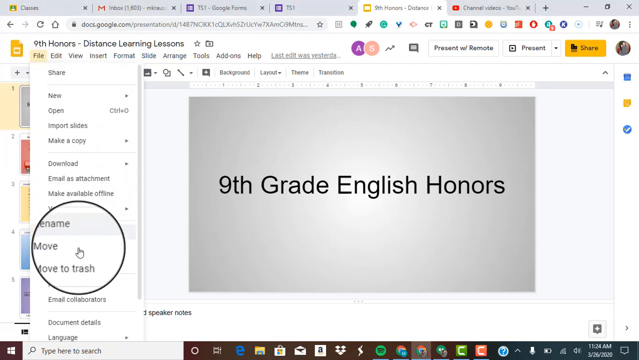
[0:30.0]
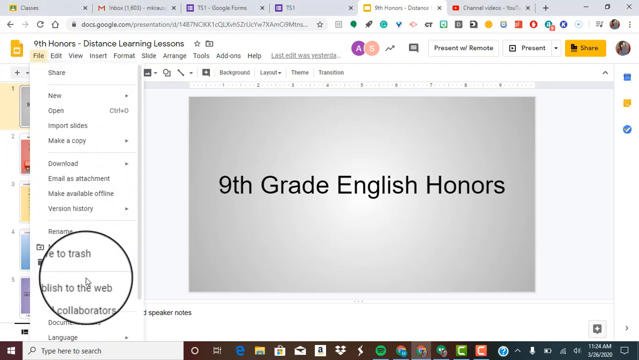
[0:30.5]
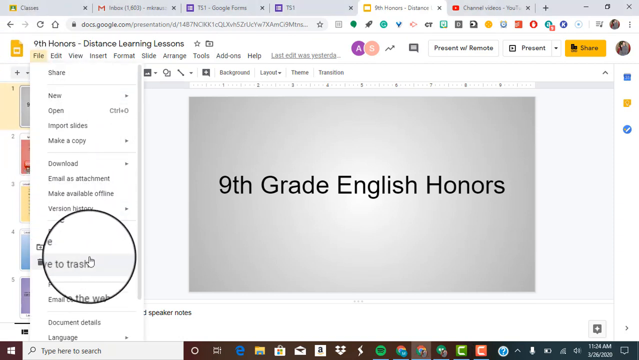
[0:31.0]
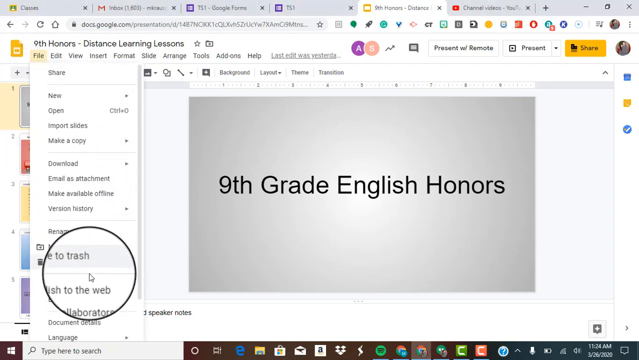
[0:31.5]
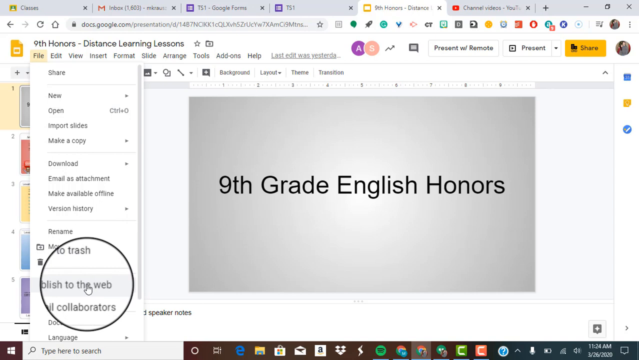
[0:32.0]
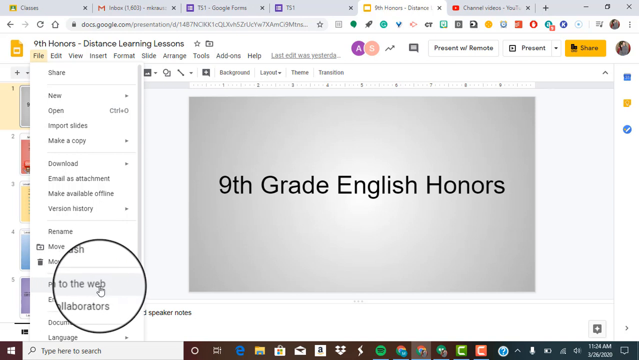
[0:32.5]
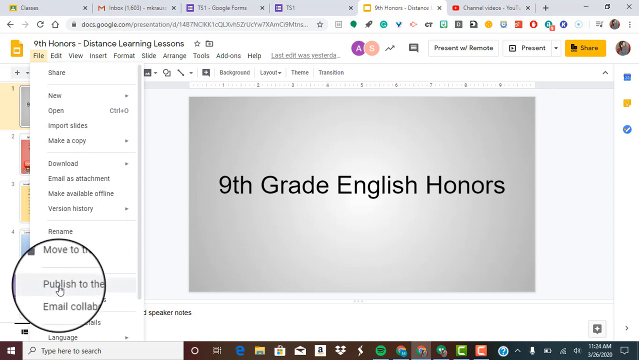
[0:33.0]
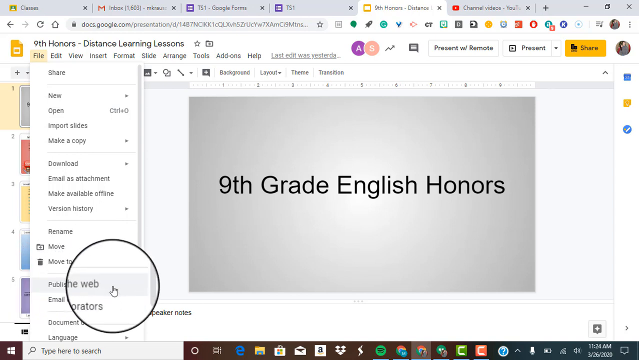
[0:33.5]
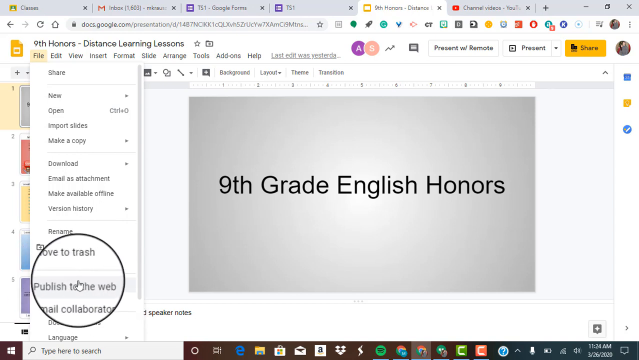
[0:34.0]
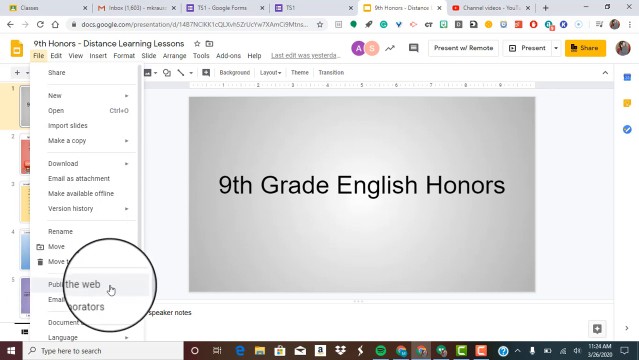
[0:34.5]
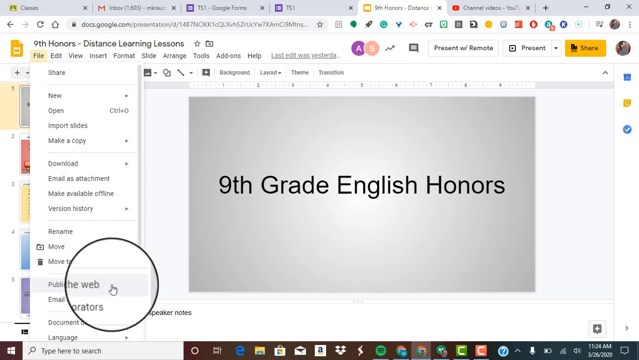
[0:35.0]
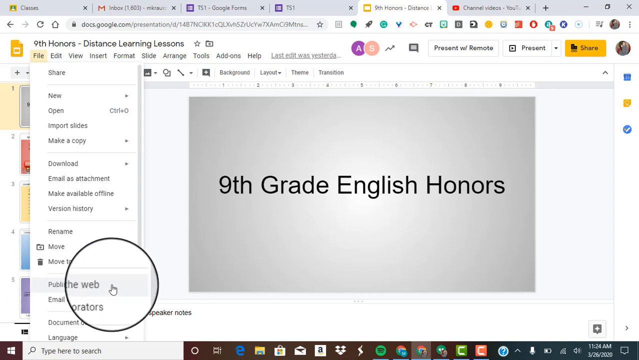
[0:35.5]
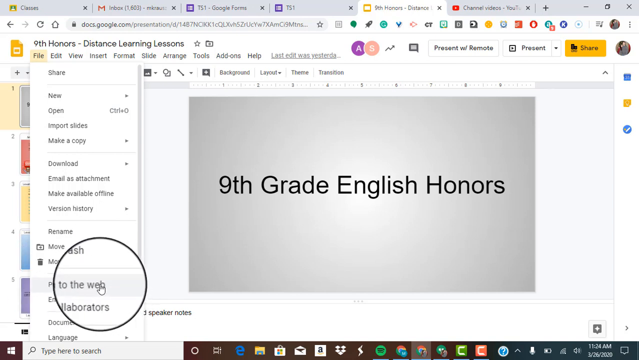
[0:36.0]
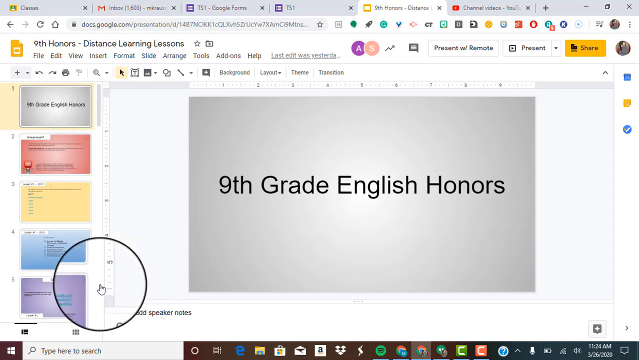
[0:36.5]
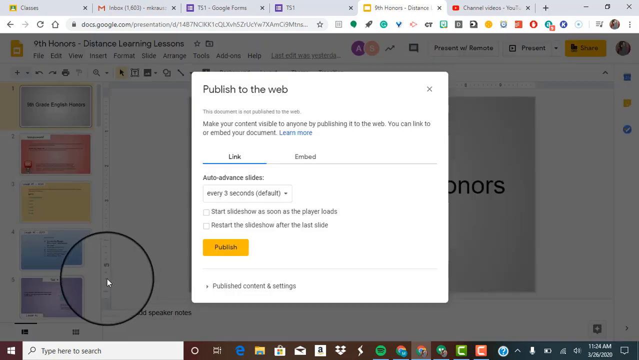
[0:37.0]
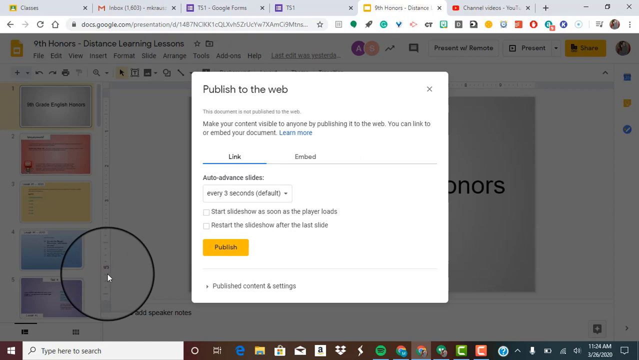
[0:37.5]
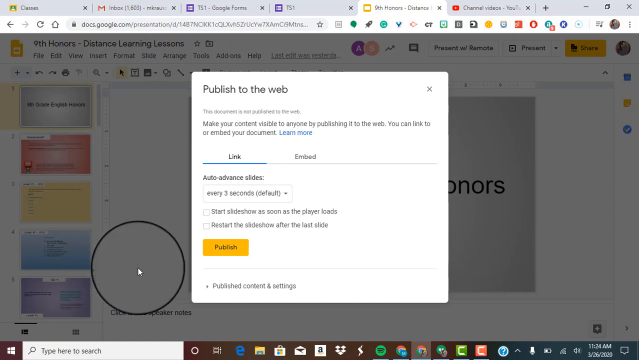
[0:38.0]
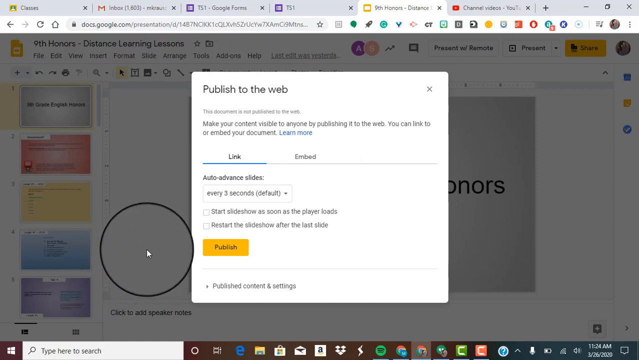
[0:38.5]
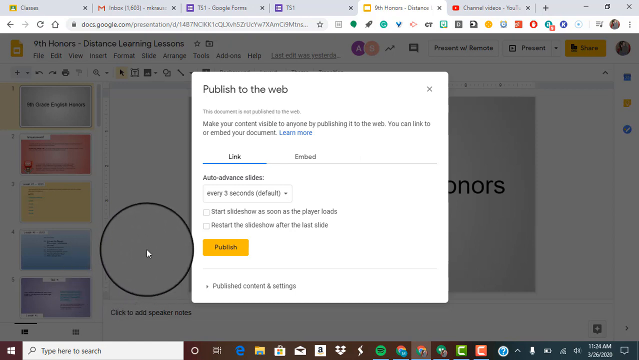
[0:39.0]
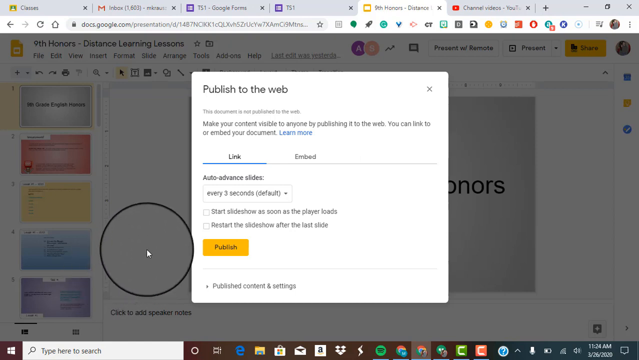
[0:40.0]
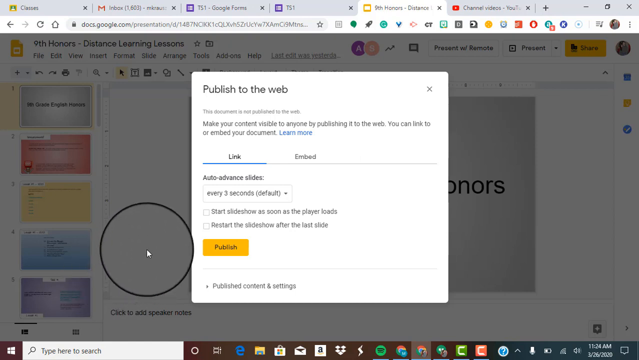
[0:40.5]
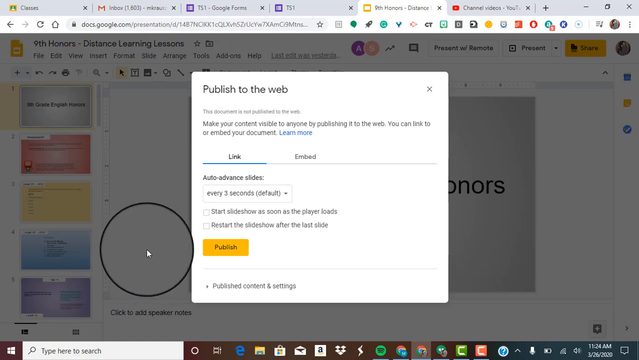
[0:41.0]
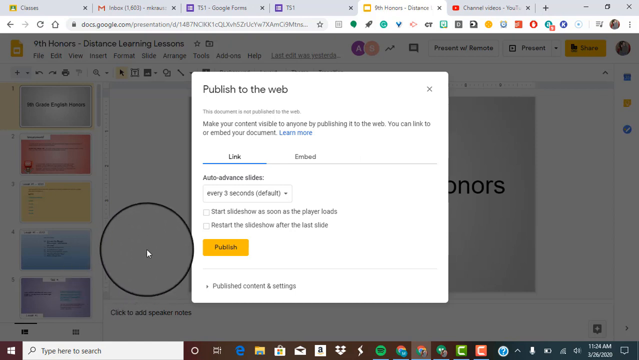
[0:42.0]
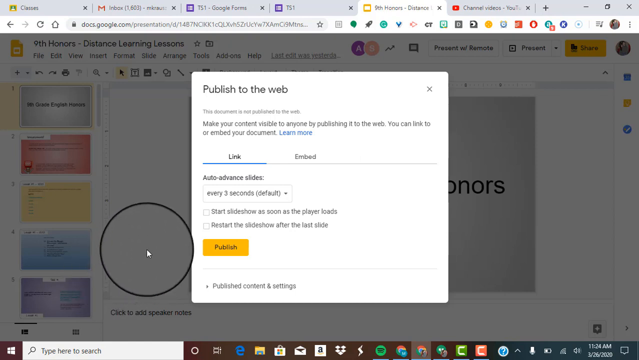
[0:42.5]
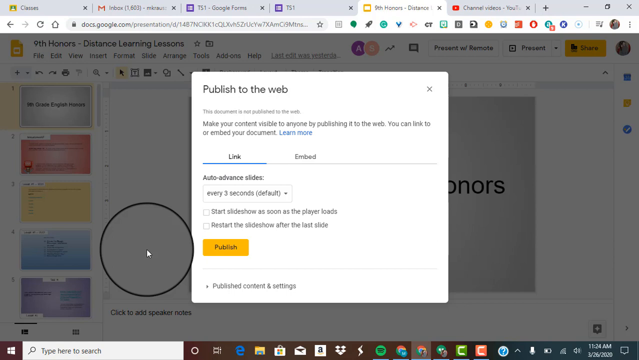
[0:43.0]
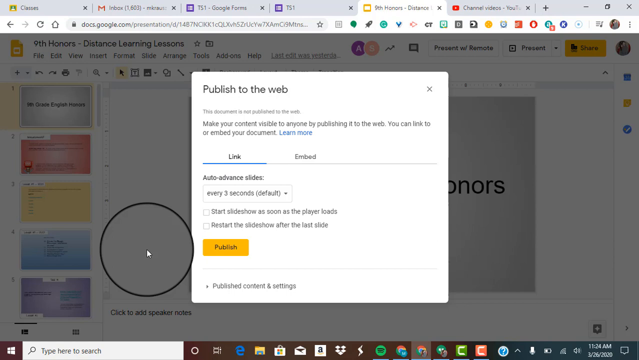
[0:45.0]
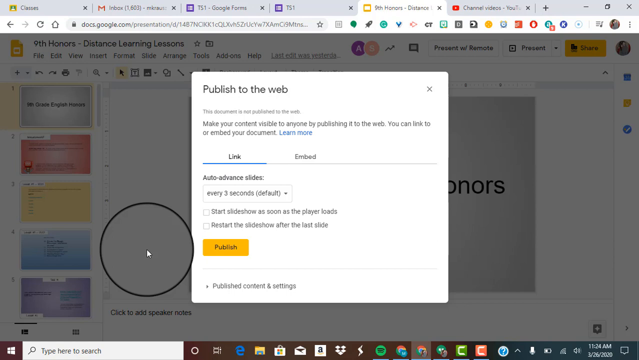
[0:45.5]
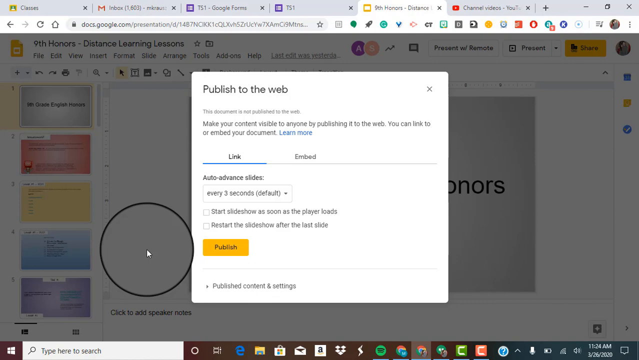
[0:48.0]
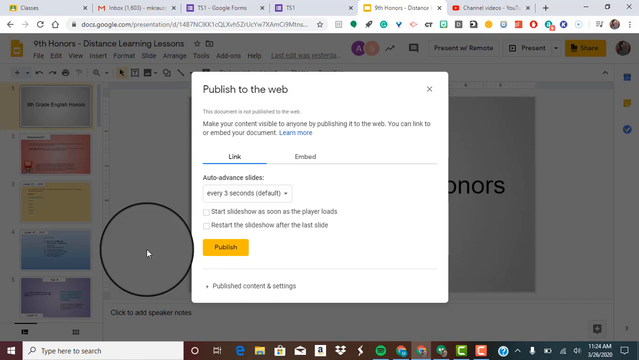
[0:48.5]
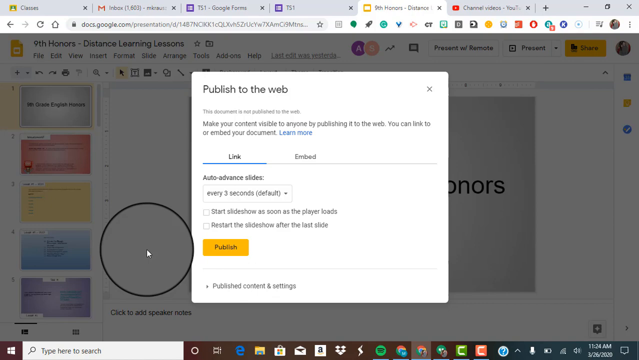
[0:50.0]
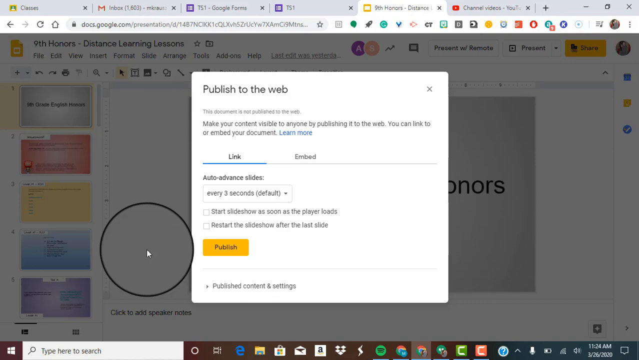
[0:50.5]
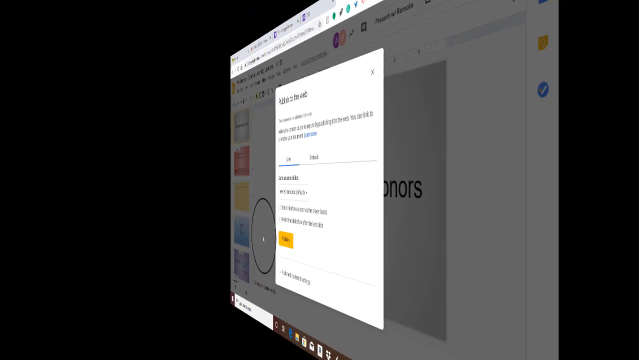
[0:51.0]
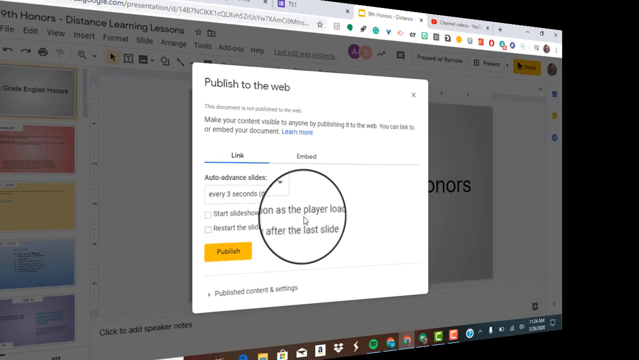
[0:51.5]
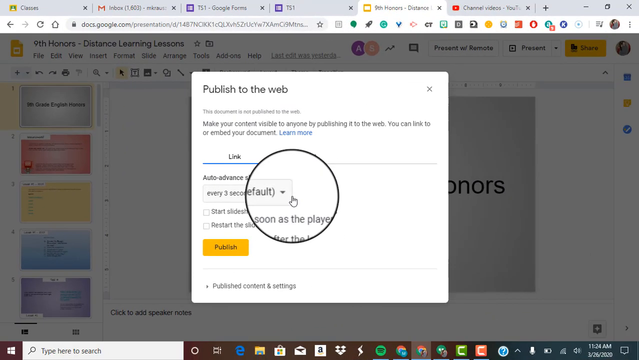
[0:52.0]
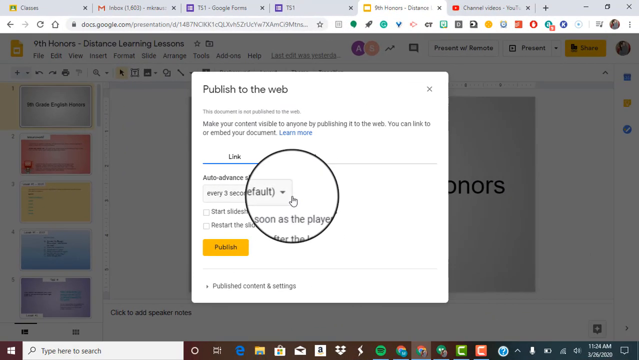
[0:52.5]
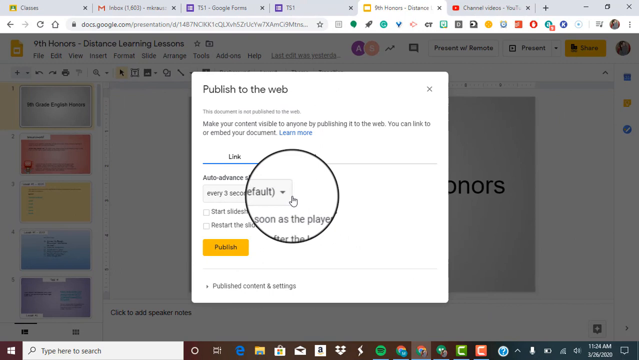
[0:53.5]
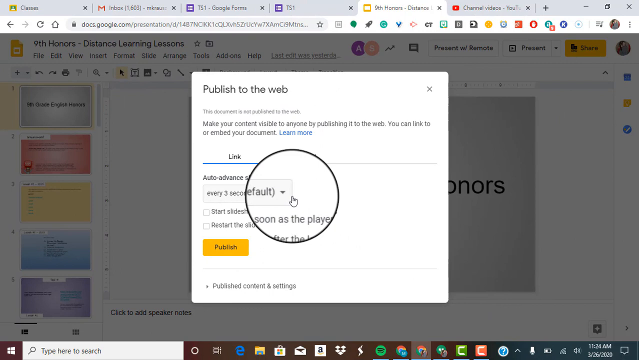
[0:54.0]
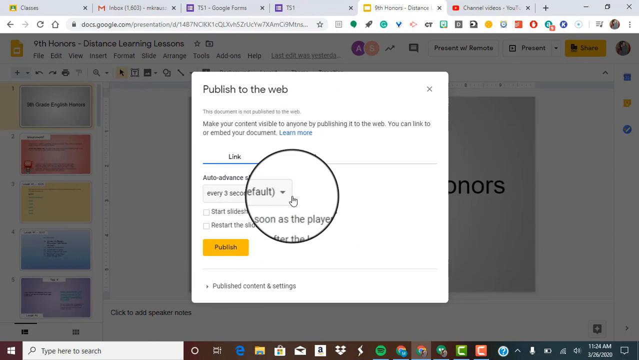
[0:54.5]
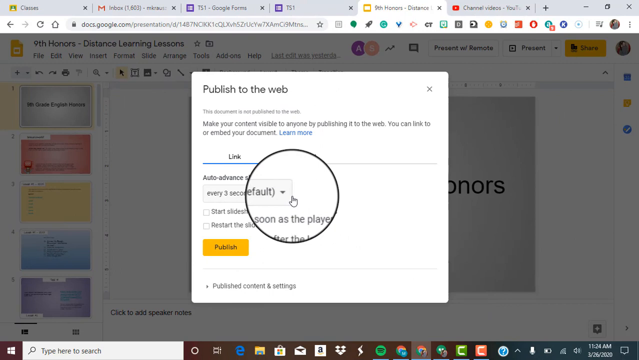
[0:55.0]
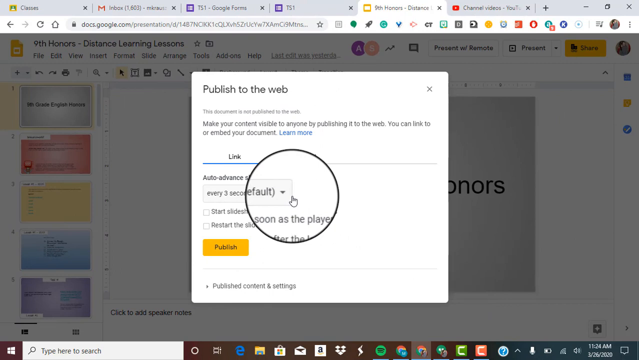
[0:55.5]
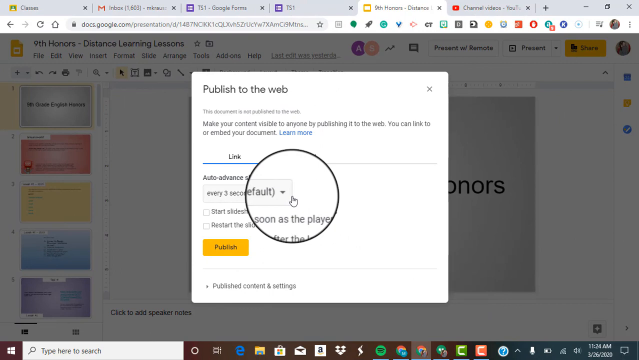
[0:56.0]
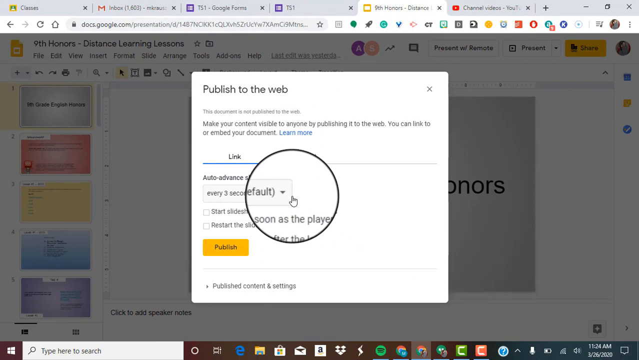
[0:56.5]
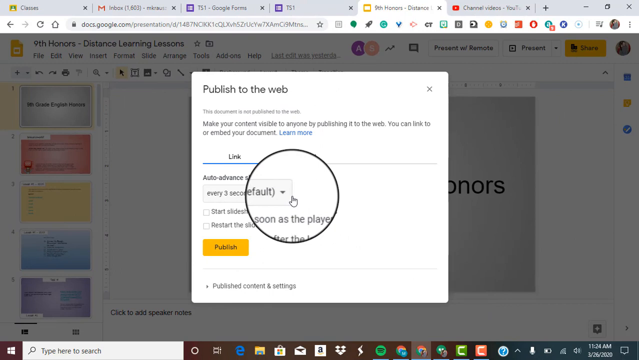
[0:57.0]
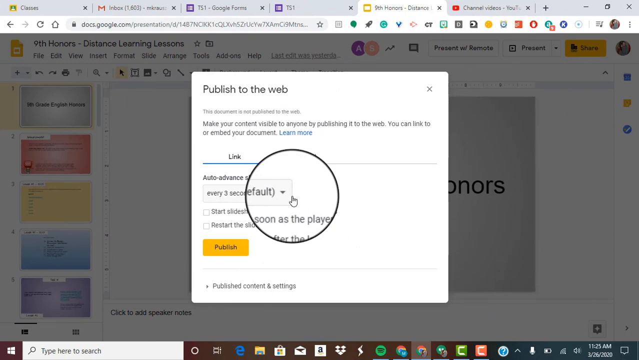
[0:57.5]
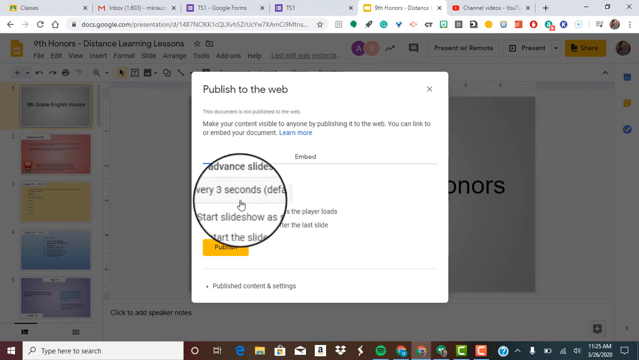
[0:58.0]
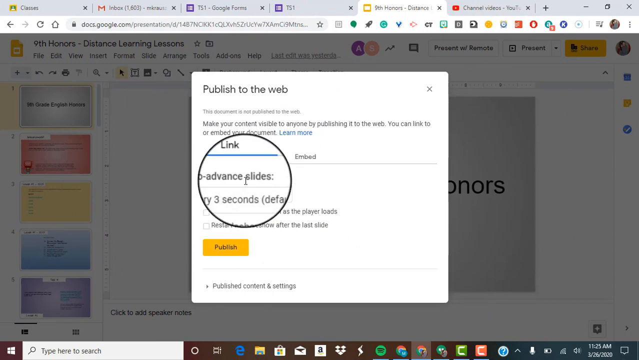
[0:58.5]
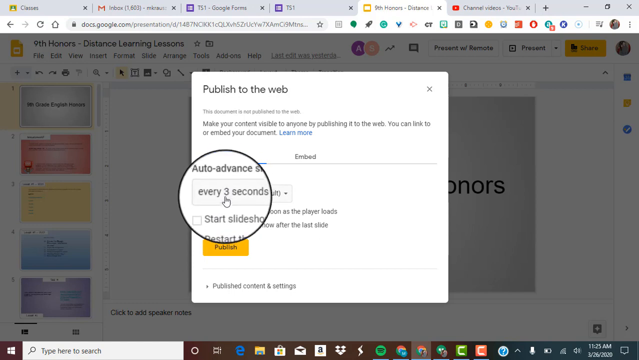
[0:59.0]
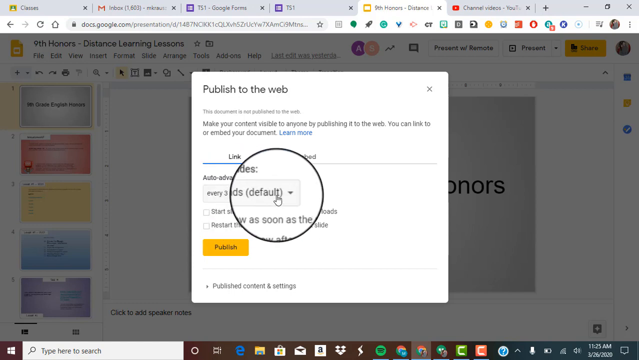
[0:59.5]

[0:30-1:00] A Google slide is open in Chrome, with several tabs at the top. The current slide has a gray background and black text reading "ninth grade English honors." The cursor is inside a transparent circle with a thin black line around it. The "file" menu is open and the mouse is over "move"; it then moves down, slides across "publish to web" and clicks it. A box pops up titled "publish to web" with some unreadable text and two clickable options, "link" and "embed." The screen stays like this for a few seconds with nothing happening, the mouse to the left of the box. Then, in a transition, the page suddenly moves and turns in a circle, and the publish to web page returns. There is an option labeled "auto-advance," and the mouse is on top of it, kind of rotating around it.